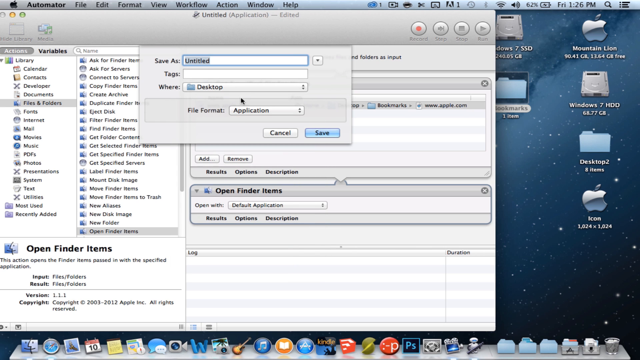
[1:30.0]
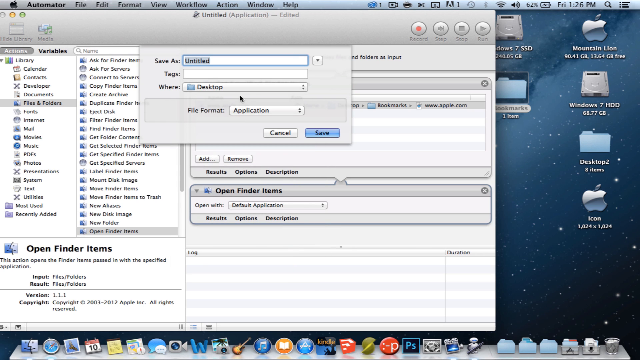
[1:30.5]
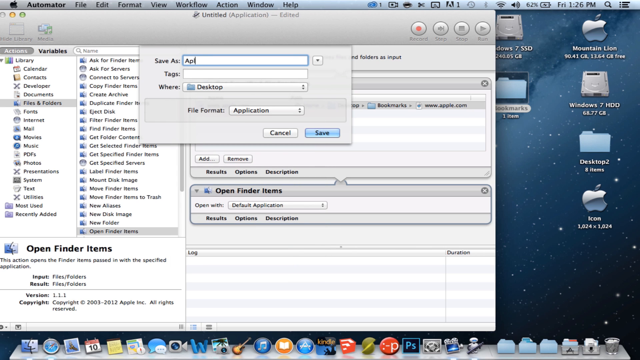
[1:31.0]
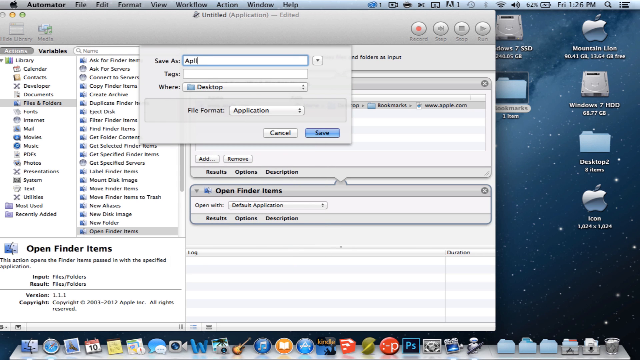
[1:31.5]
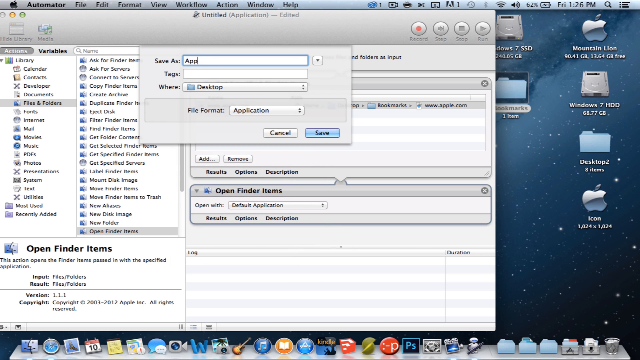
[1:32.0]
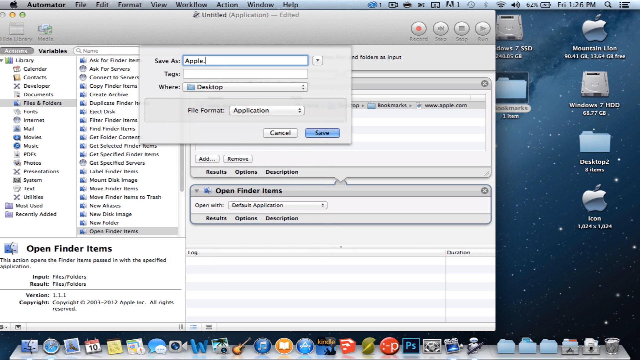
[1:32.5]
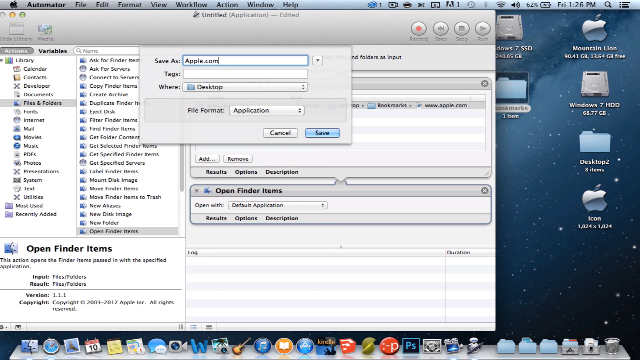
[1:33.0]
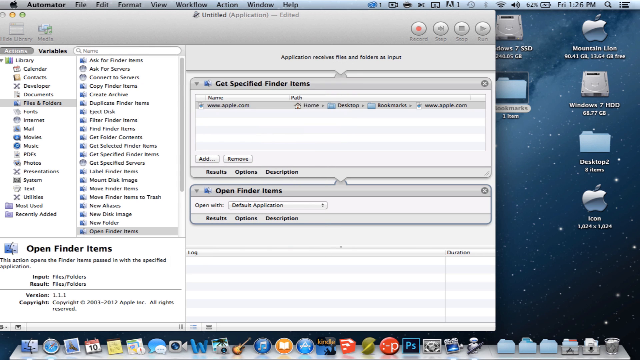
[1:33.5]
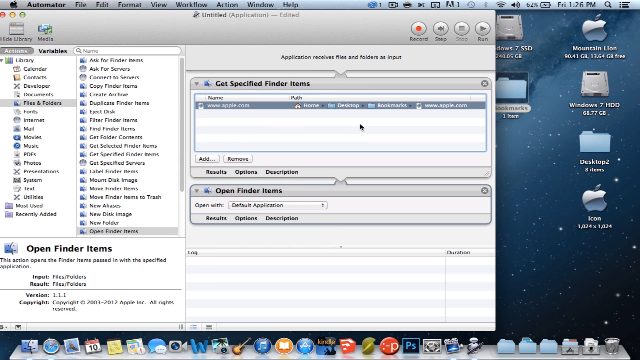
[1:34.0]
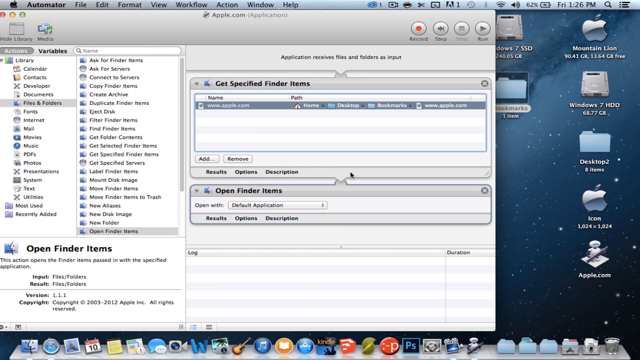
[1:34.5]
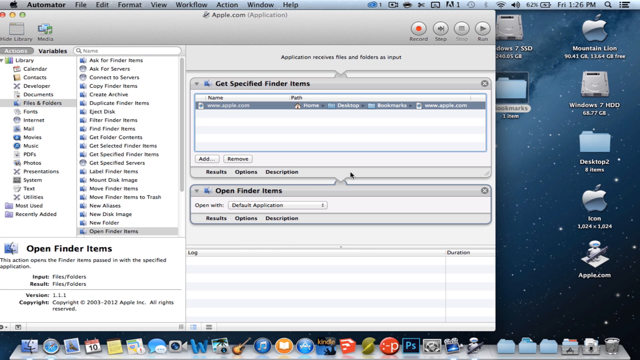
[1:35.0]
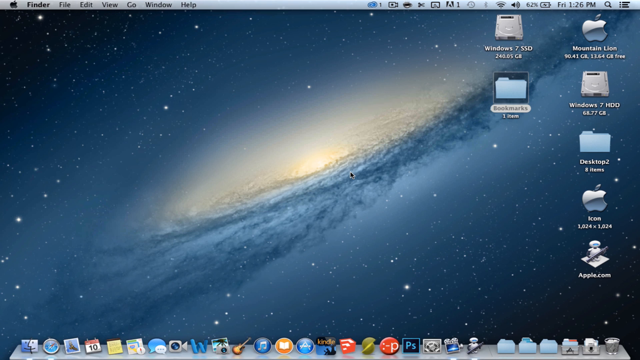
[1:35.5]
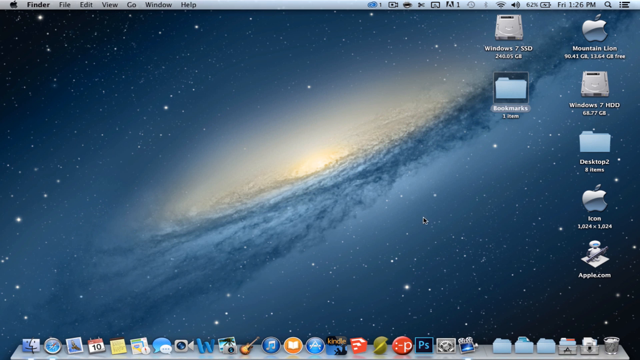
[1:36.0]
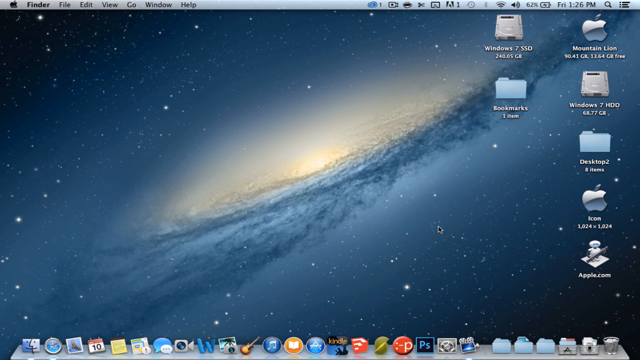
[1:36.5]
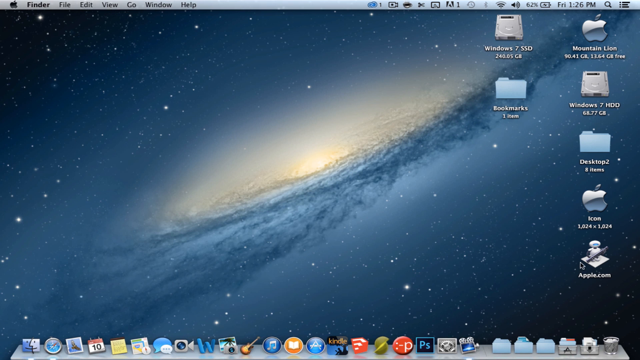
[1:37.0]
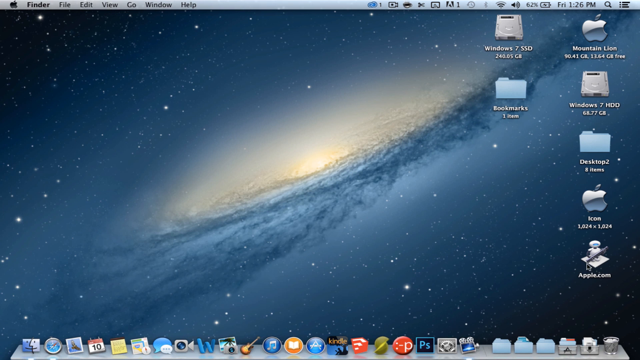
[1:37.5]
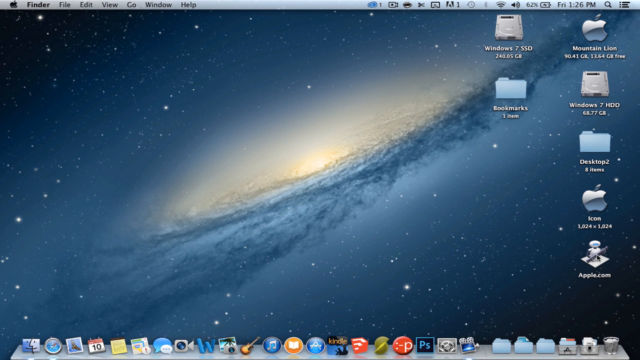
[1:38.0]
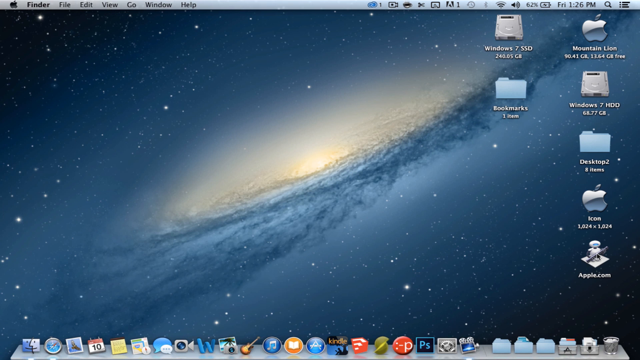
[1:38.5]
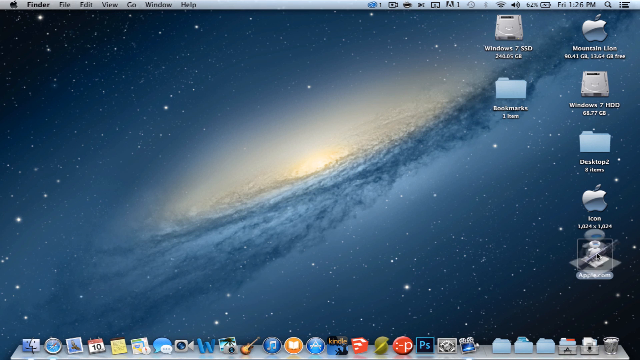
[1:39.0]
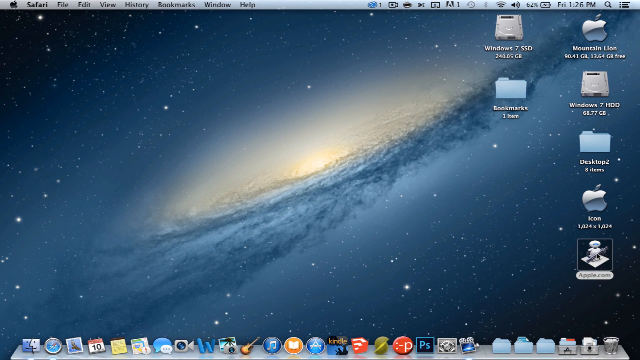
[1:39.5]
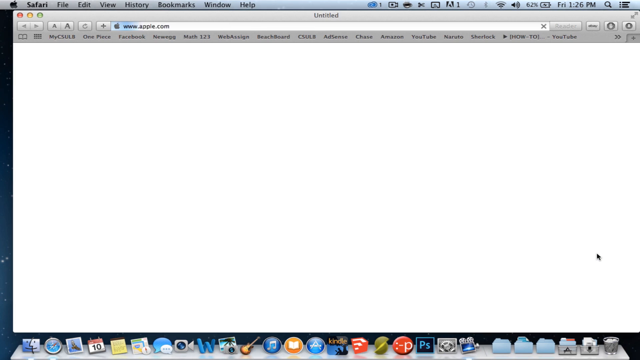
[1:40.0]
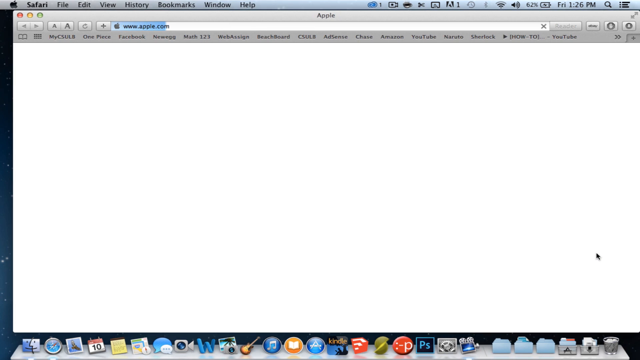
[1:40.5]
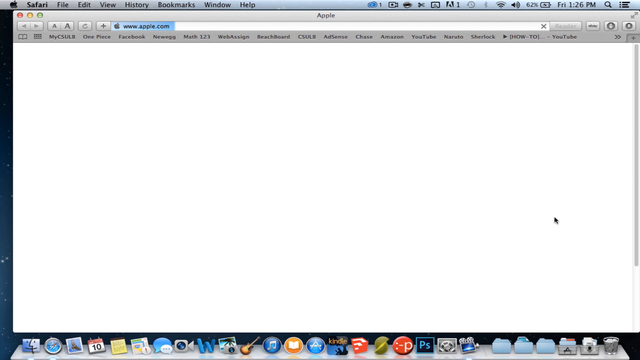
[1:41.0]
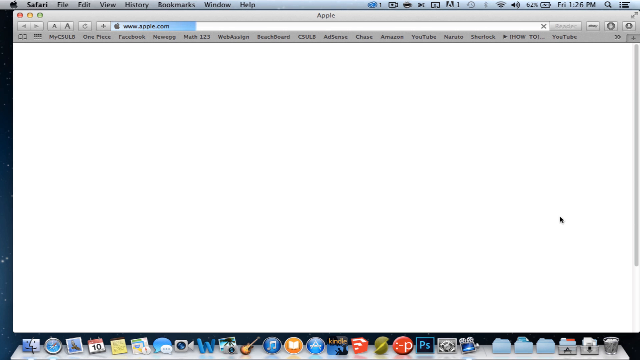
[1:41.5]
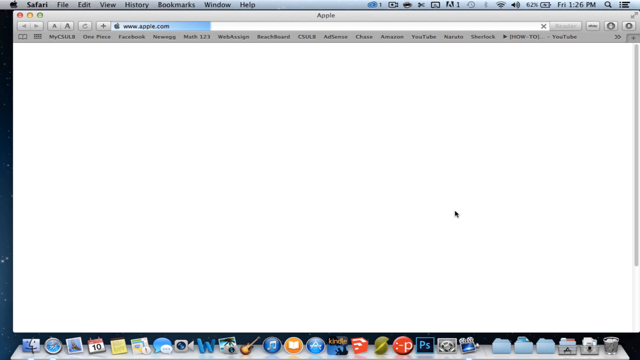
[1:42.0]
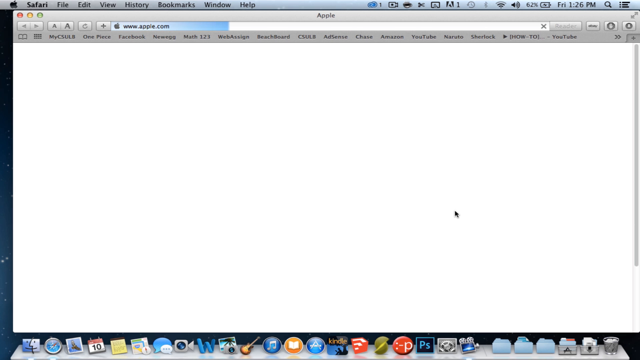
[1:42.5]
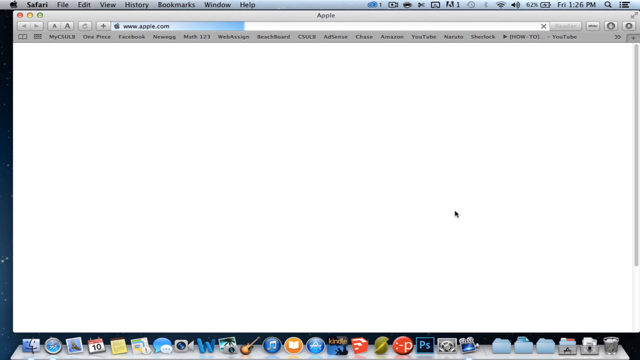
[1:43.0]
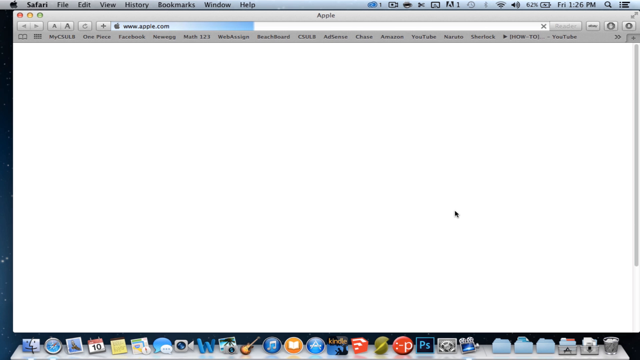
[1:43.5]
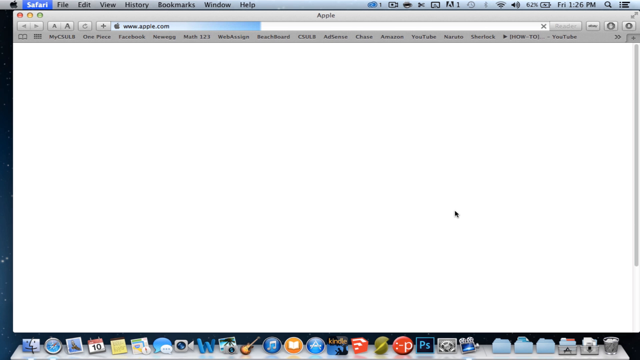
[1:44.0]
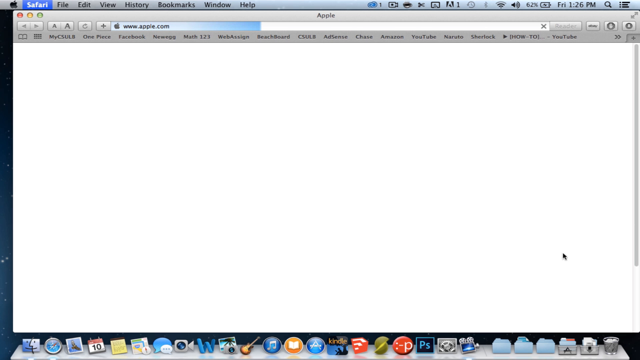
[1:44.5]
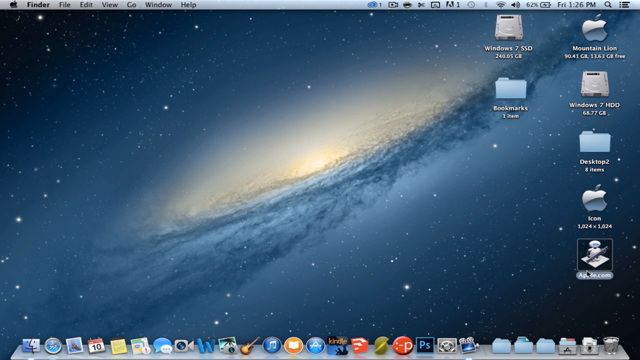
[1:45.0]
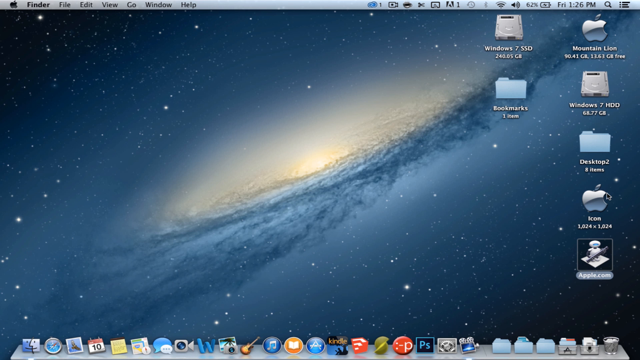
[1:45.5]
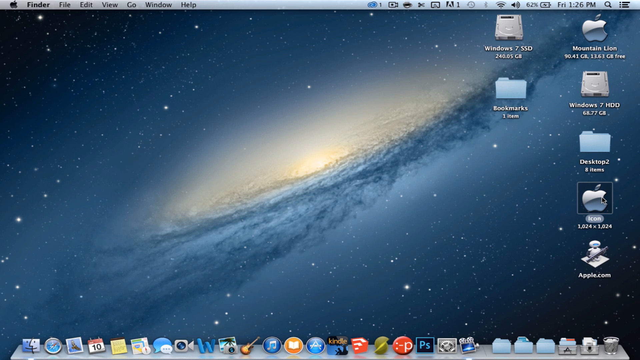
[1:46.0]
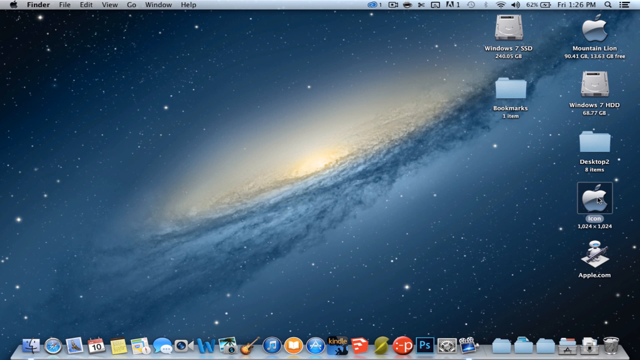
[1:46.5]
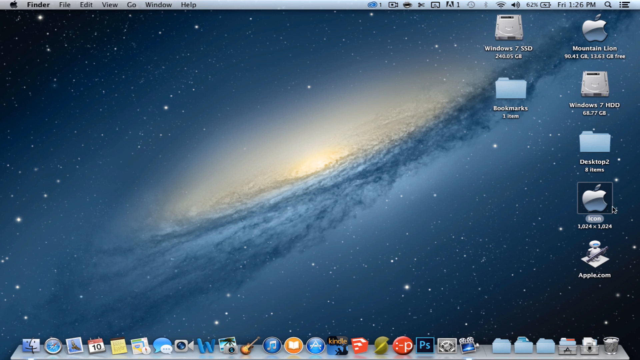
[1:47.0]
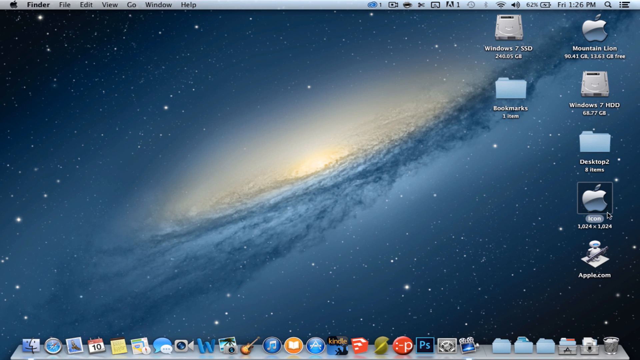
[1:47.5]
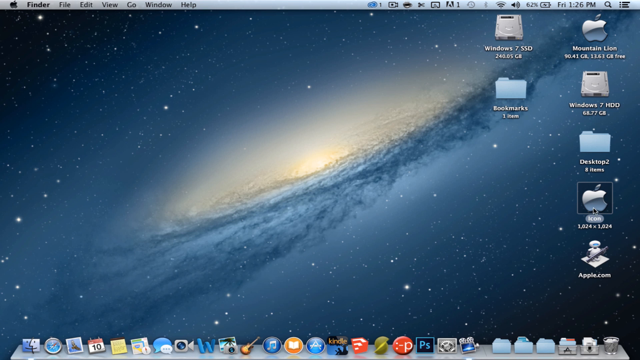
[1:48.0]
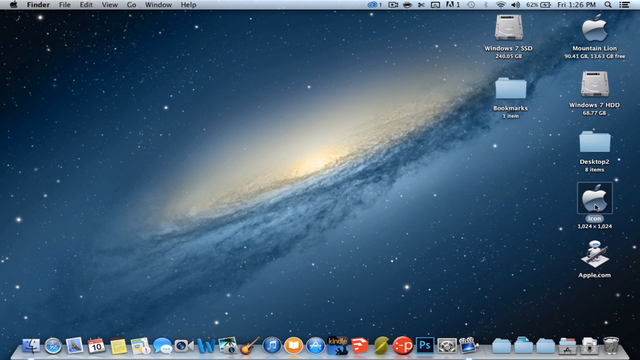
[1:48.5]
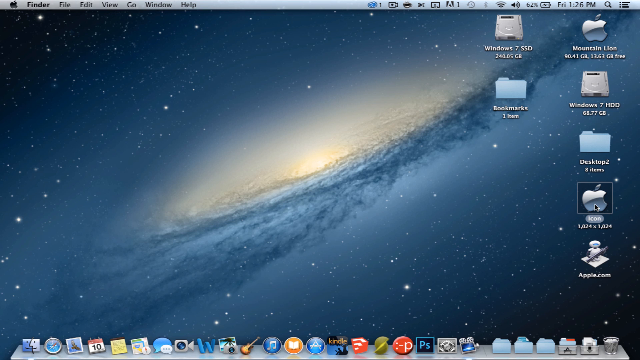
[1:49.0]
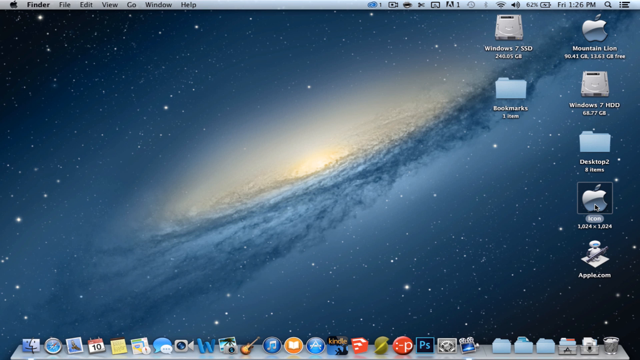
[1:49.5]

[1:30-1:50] The user names the Automator application file apple.com and saves it. The new apple.com application icon shows up on the desktop, just beneath the original Apple shortcut and to the right. The user exits Automator, returns to the desktop, hovers the mouse over the new apple.com application icon and clicks it. The application launches Safari, which starts loading the Apple website automatically. Just before the site fully loads, the user closes Safari, then moves the cursor to hover over the original Apple shortcut icon just above the new app.